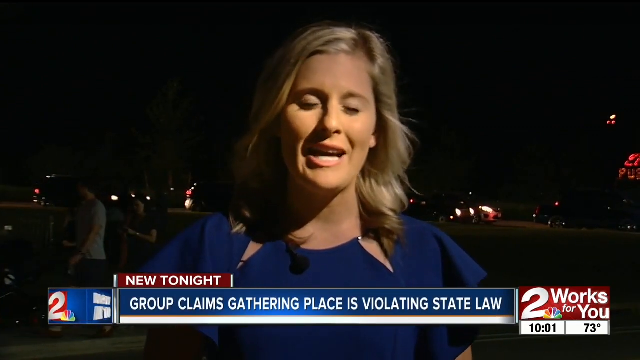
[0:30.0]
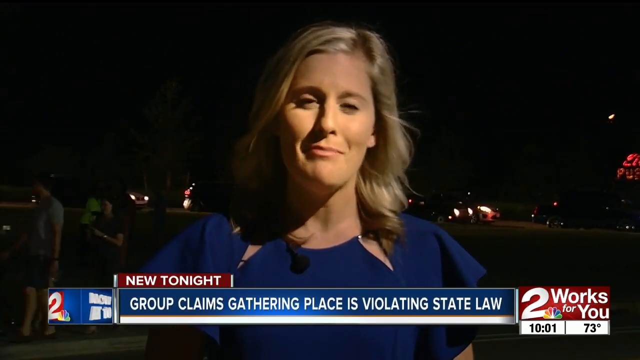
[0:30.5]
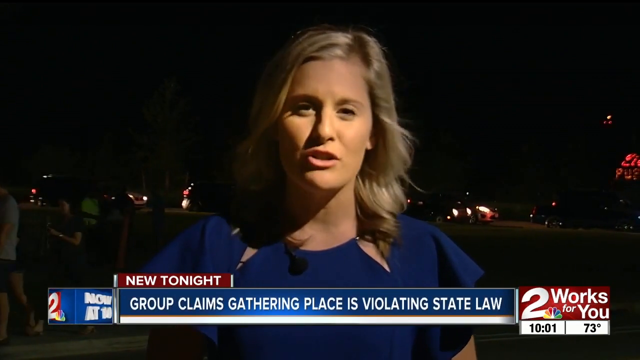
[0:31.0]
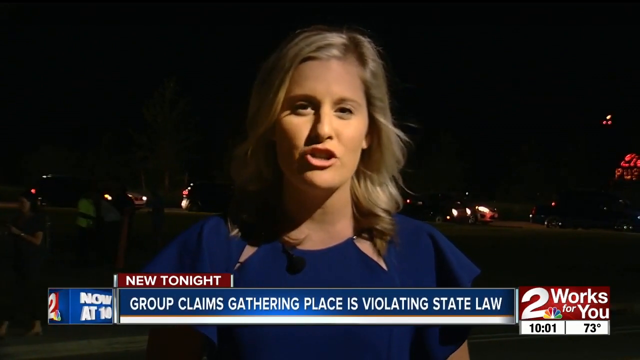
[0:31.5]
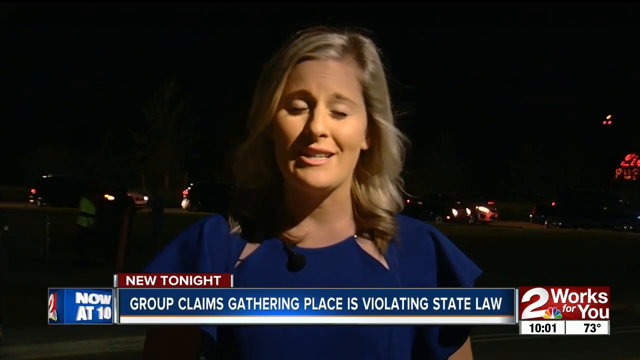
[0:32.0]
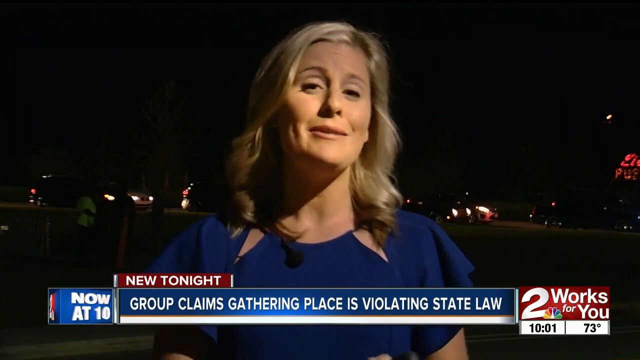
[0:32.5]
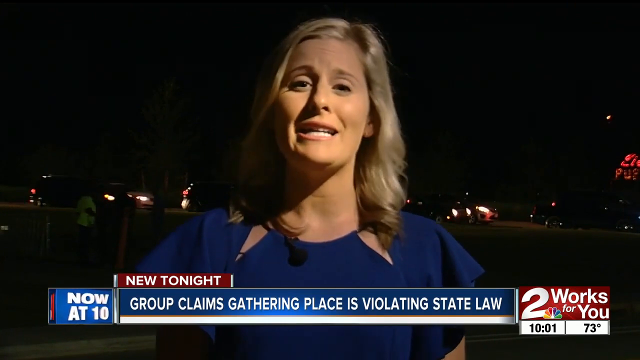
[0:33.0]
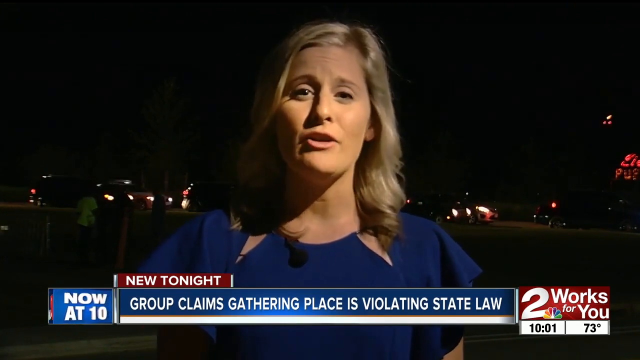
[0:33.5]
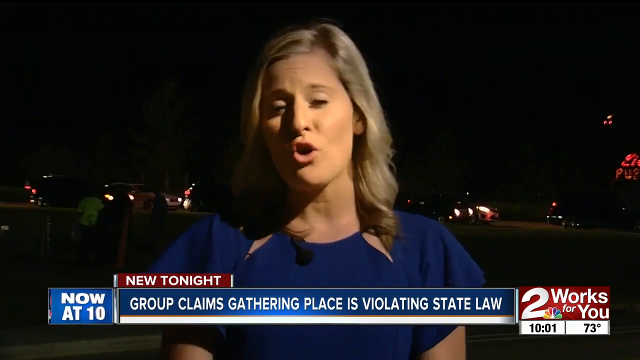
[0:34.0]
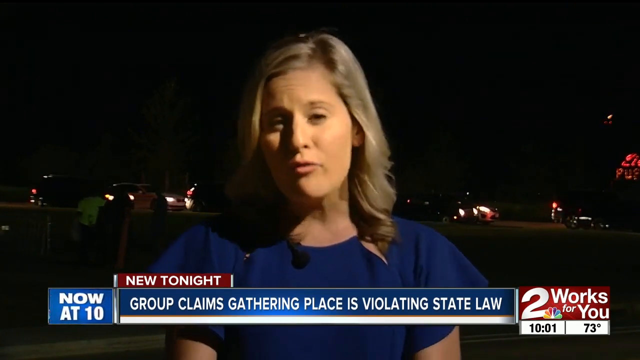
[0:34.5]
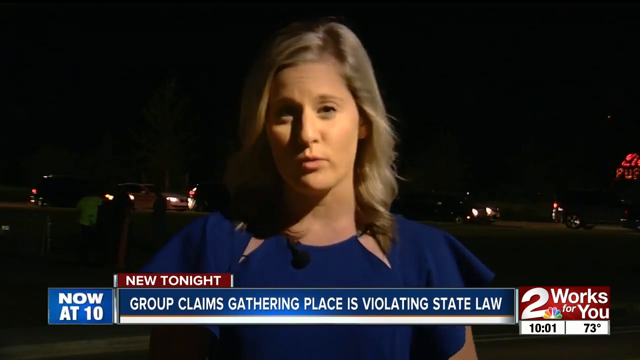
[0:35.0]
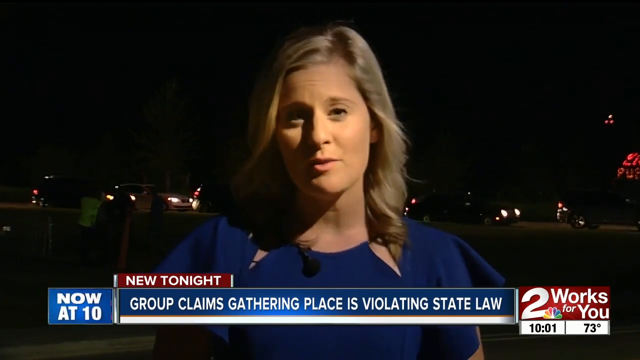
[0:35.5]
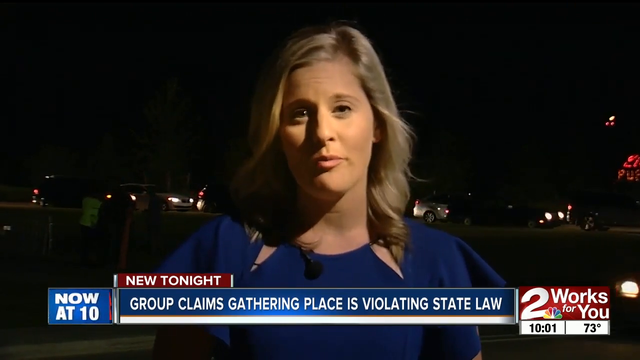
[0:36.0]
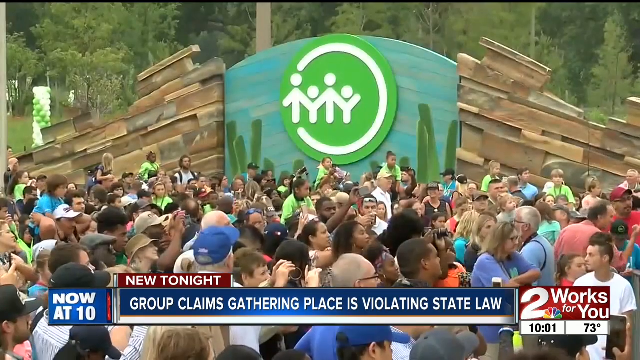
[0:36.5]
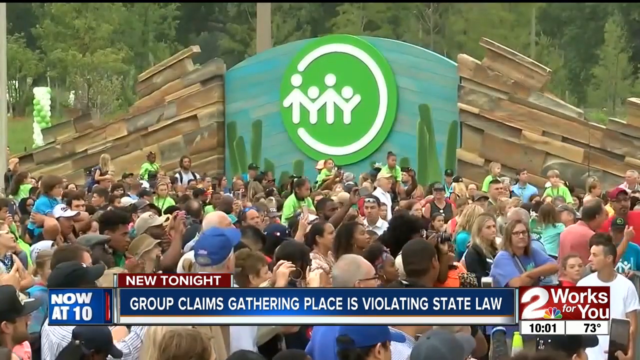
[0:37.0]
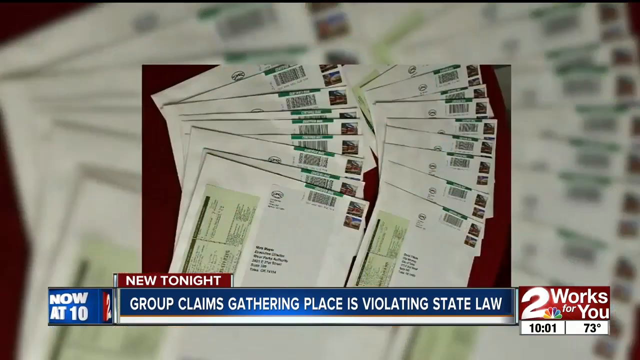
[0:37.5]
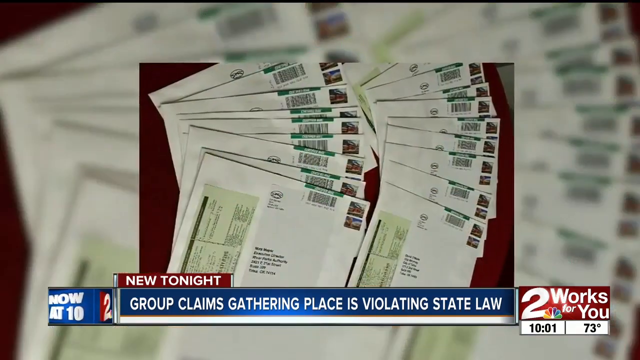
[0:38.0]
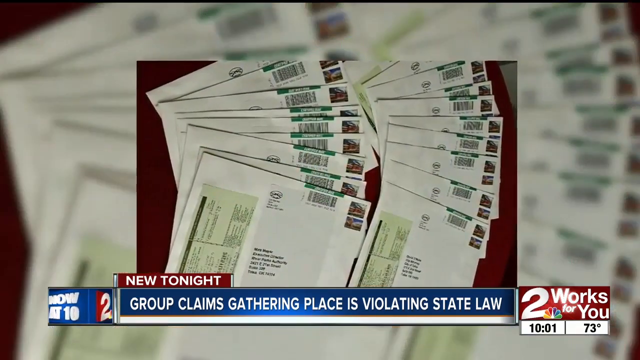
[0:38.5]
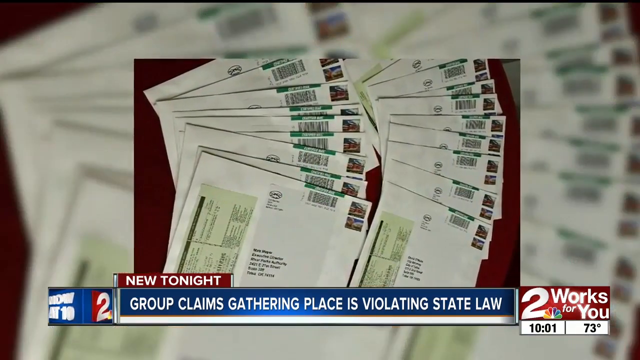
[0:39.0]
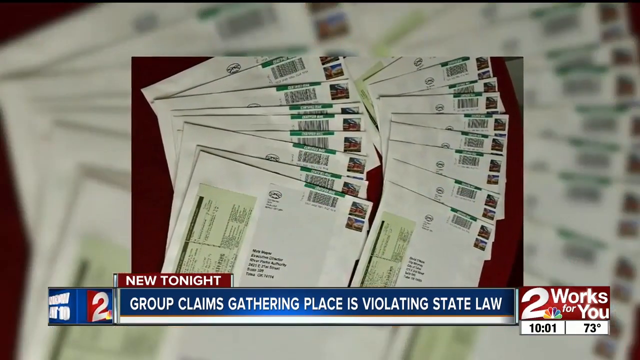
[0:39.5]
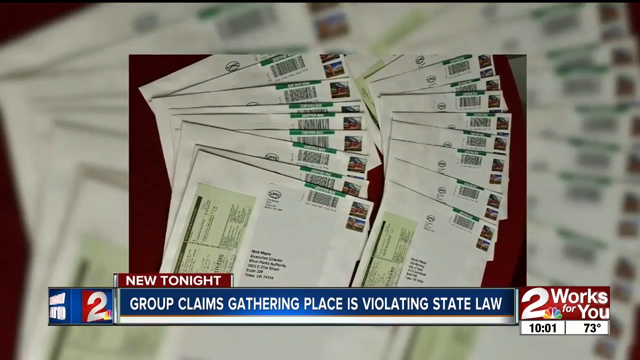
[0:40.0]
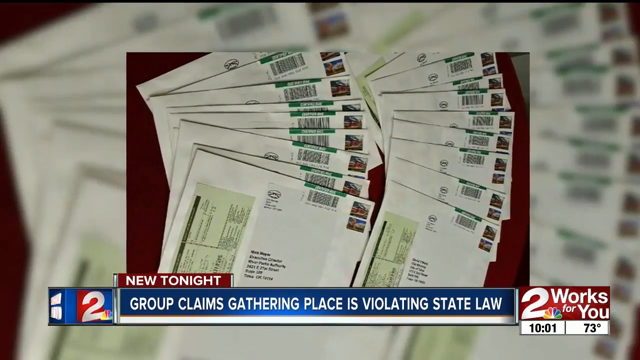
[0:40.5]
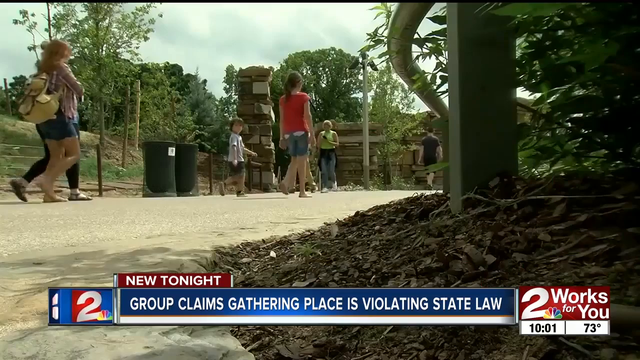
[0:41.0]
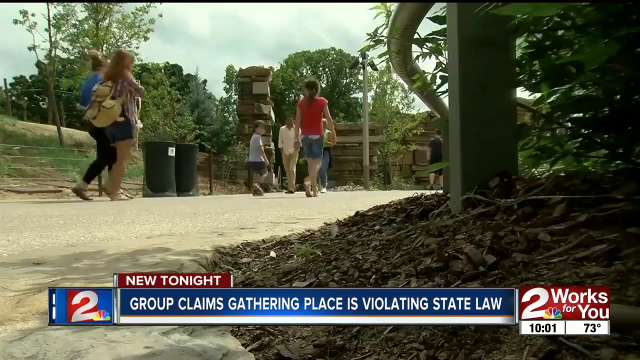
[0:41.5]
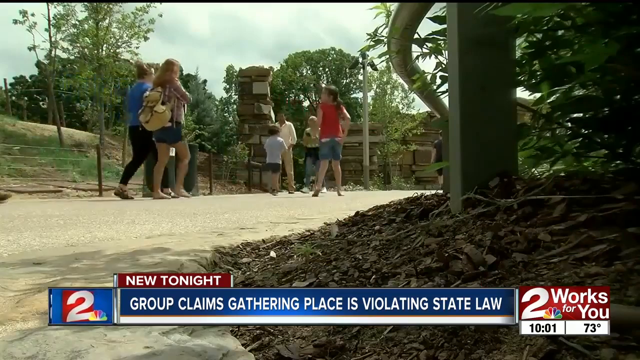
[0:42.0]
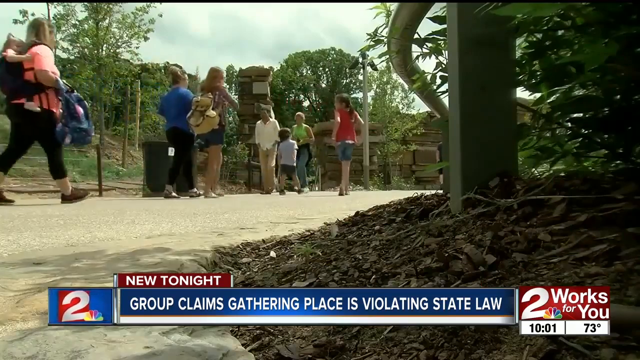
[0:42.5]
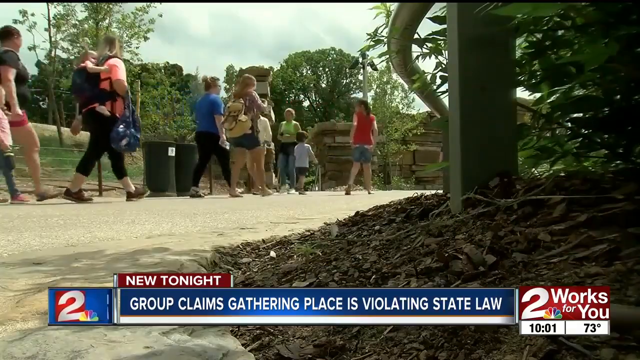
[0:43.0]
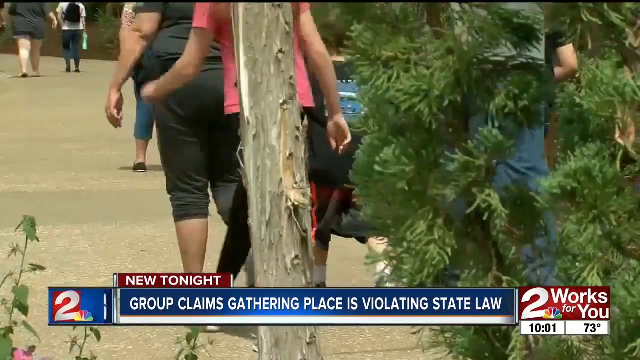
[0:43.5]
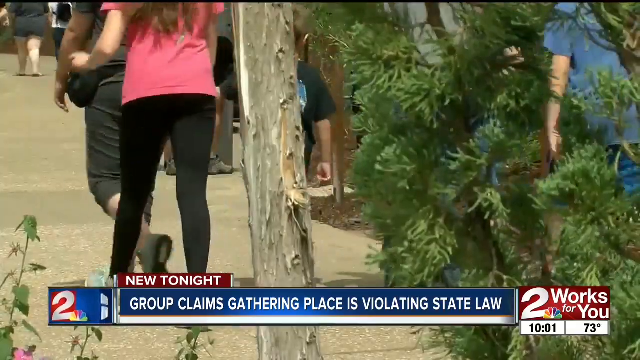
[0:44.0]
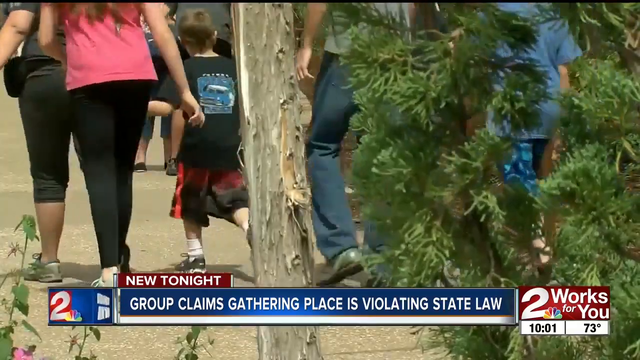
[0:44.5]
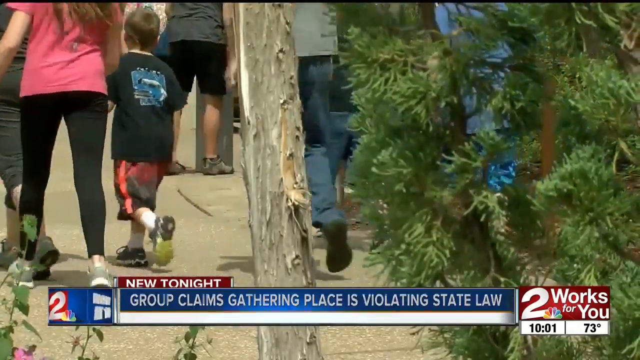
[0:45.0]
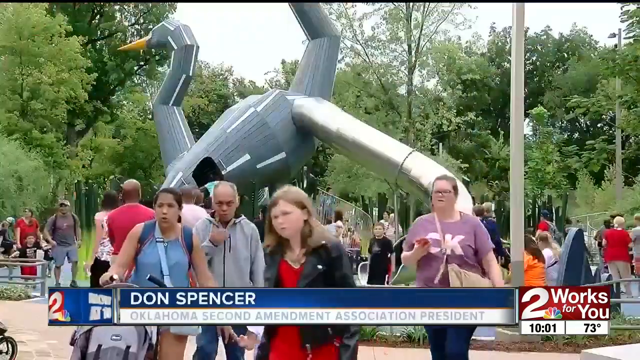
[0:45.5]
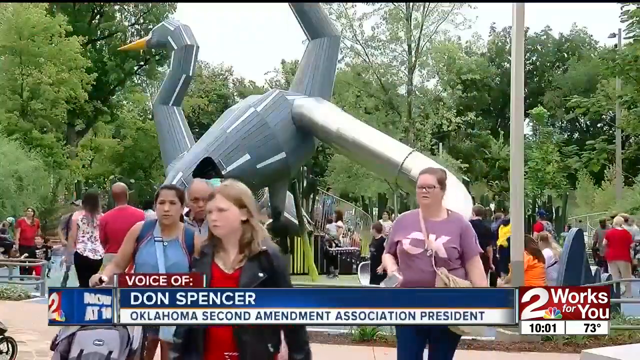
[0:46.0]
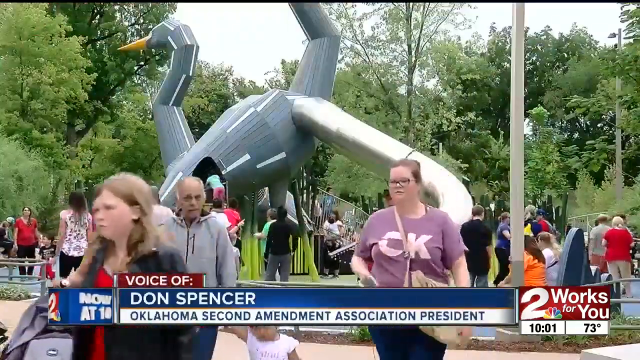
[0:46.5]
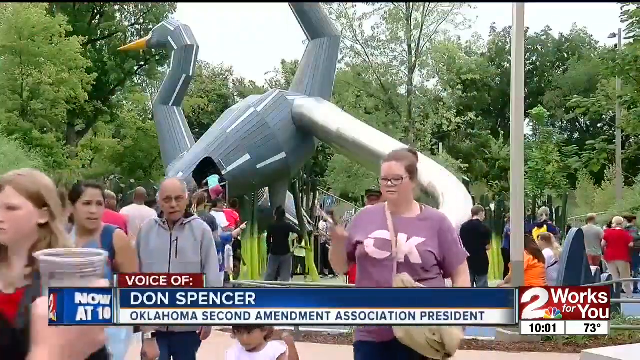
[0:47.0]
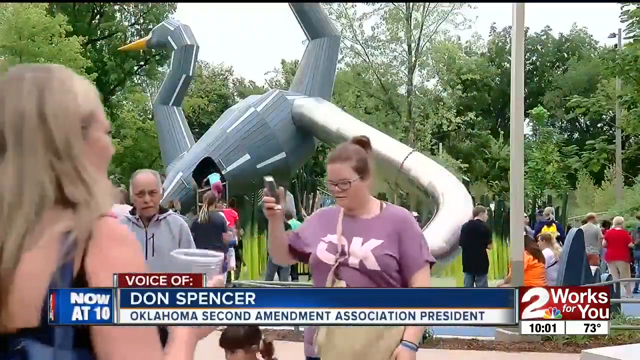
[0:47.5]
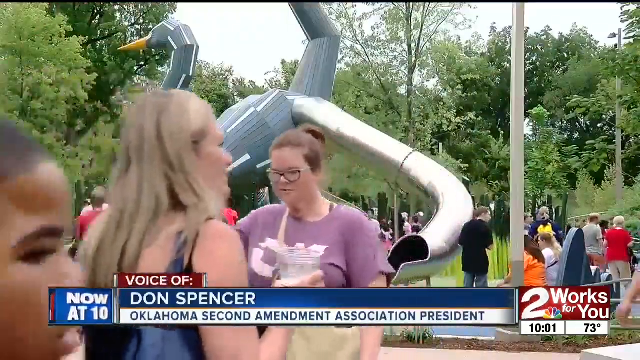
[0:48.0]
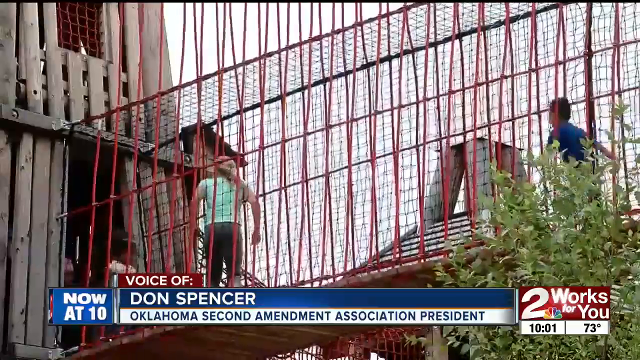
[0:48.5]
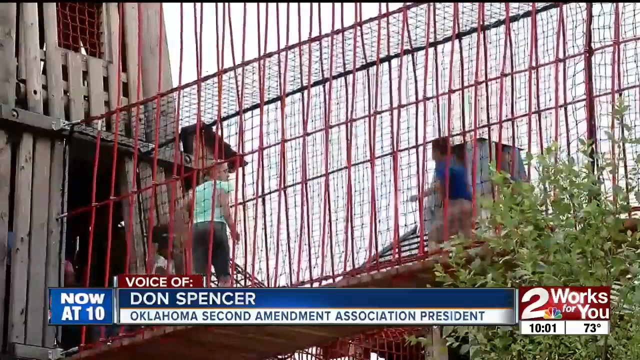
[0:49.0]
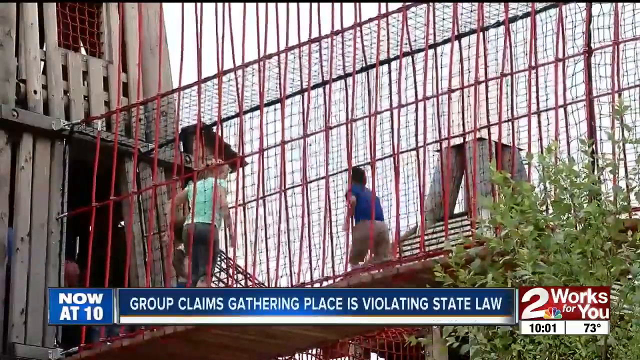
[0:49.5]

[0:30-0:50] A woman in a blue dress, who looks like a reporter, seems to be talking about something; she appears to be outside against a black background with cars passing by. A crowd is gathered at some place, and then files of some sort are shown. People pass by while being recorded on video: groups of people, dumpsters, and children passing by. Crowds of people pass through what looks like a park. Children run around on a playground that has red wiring around it, playing.